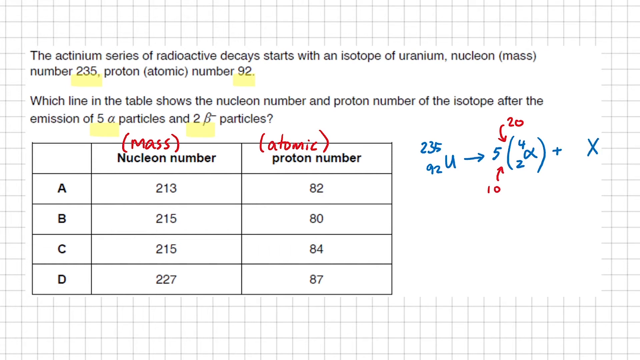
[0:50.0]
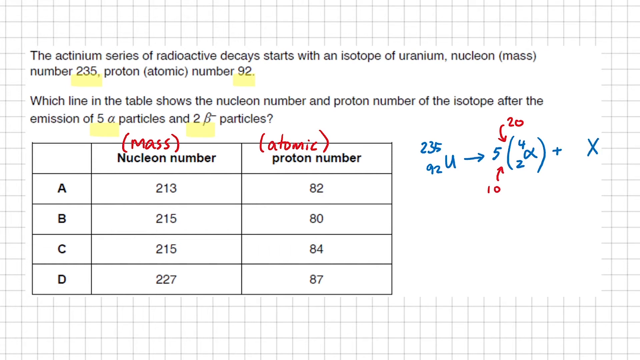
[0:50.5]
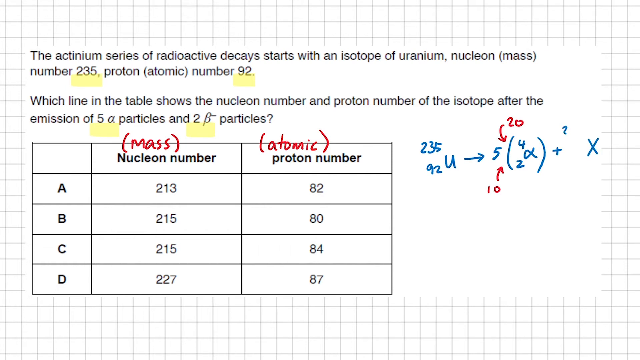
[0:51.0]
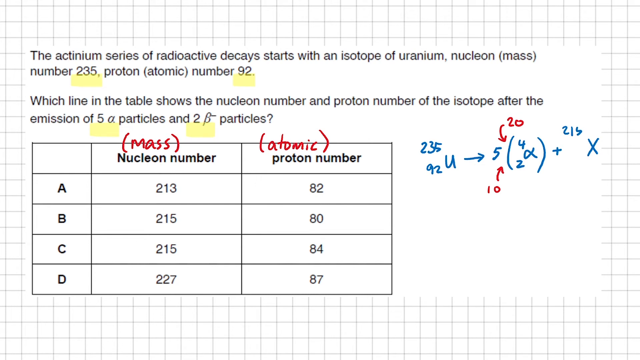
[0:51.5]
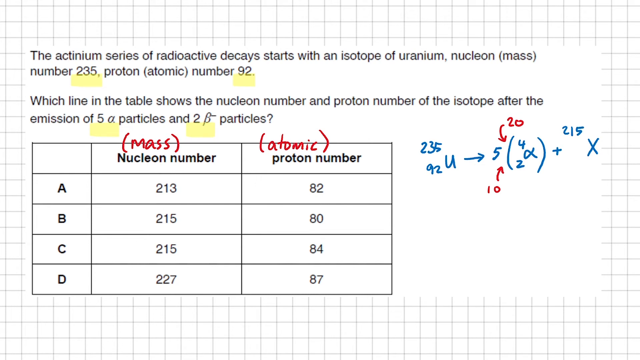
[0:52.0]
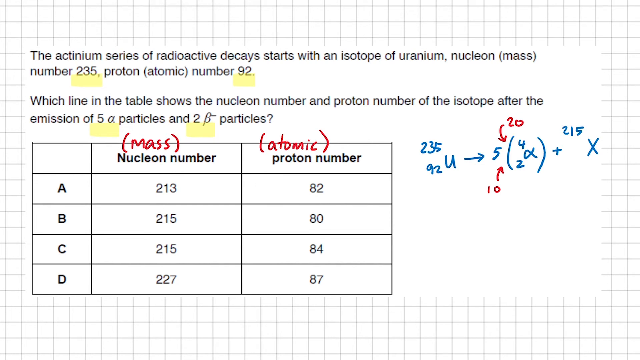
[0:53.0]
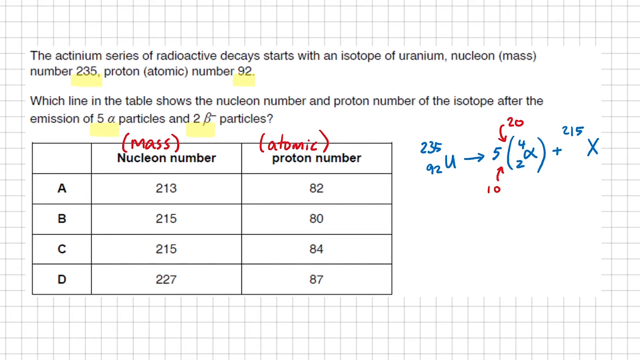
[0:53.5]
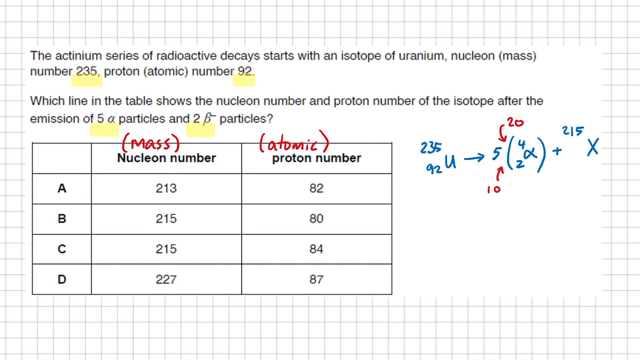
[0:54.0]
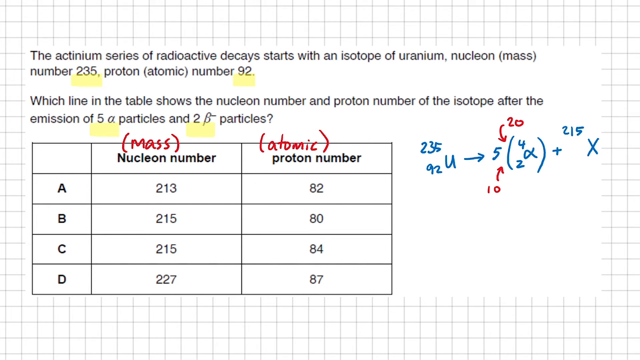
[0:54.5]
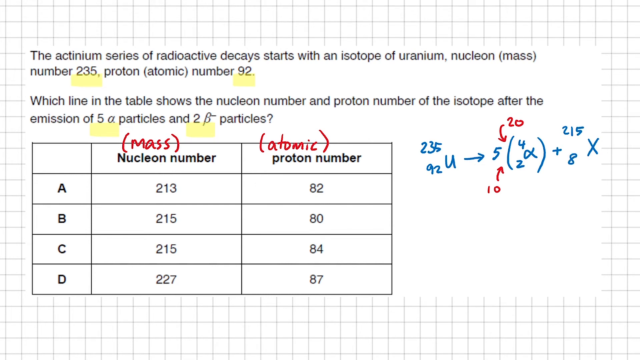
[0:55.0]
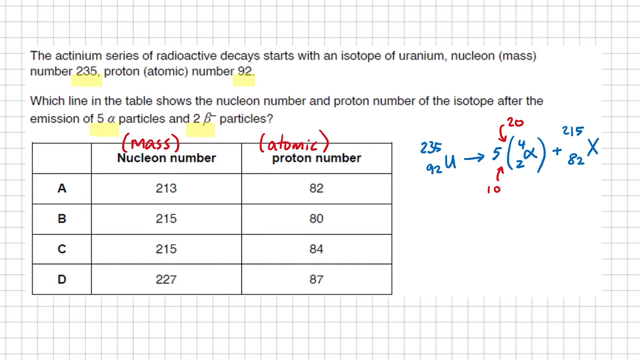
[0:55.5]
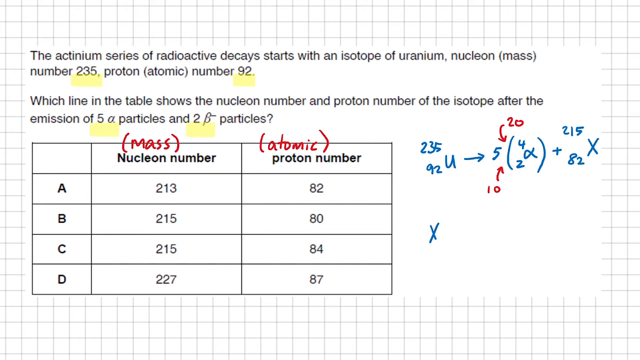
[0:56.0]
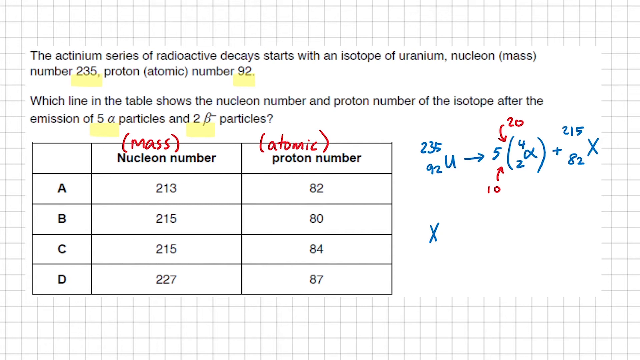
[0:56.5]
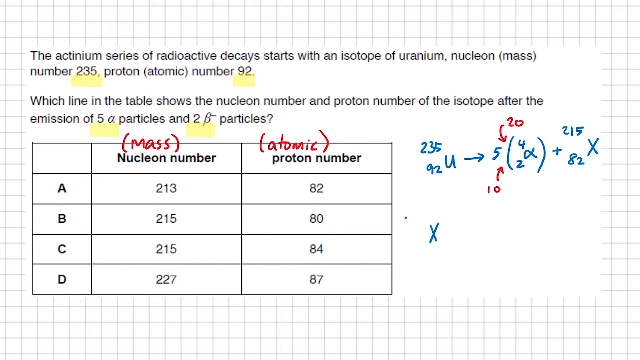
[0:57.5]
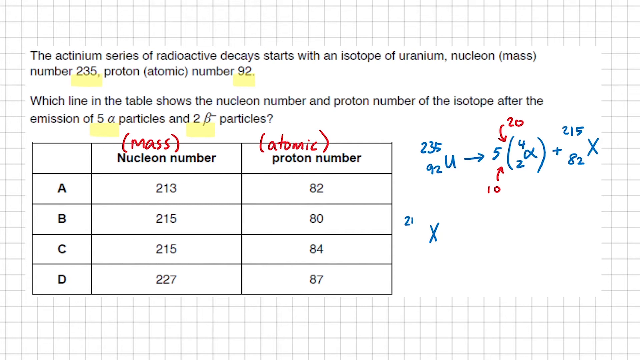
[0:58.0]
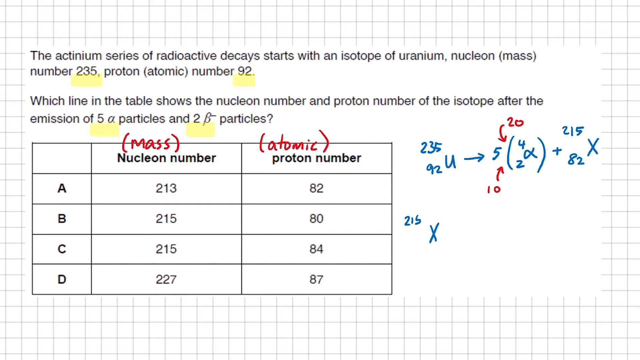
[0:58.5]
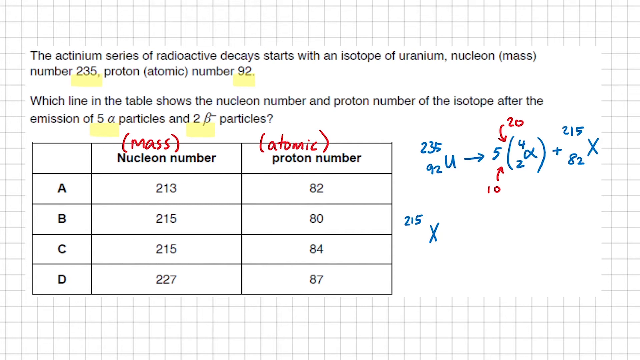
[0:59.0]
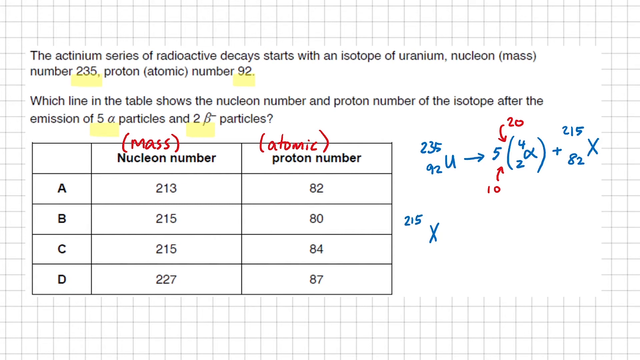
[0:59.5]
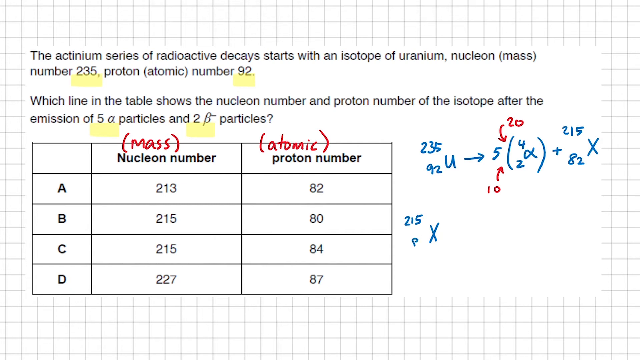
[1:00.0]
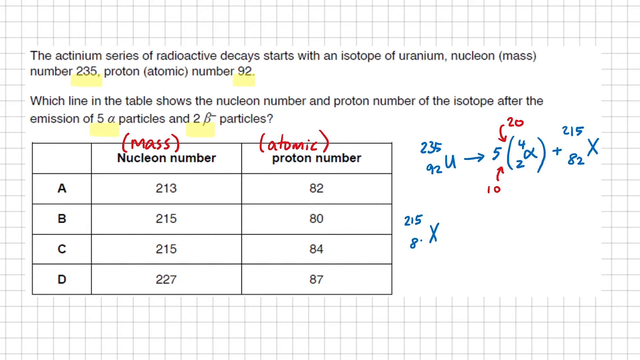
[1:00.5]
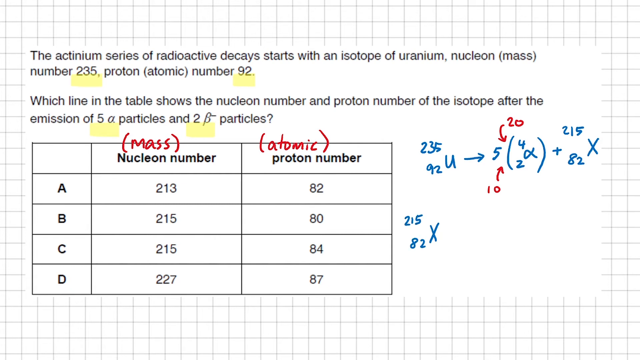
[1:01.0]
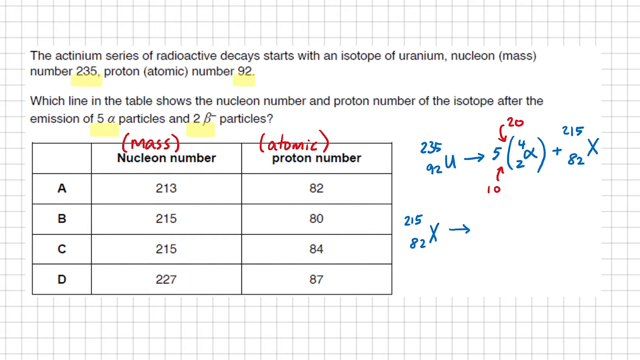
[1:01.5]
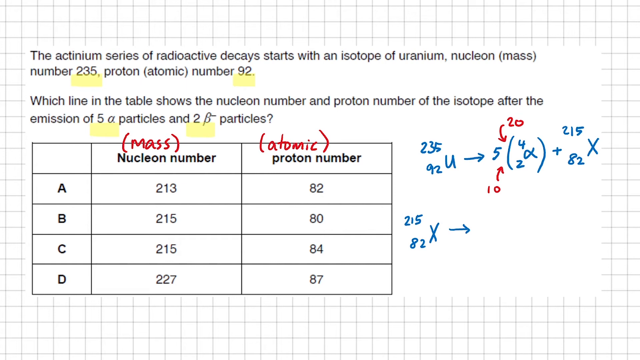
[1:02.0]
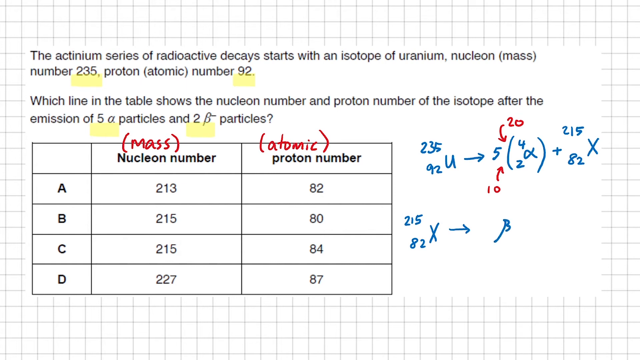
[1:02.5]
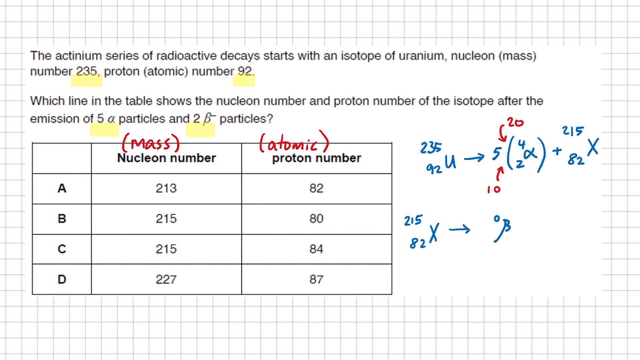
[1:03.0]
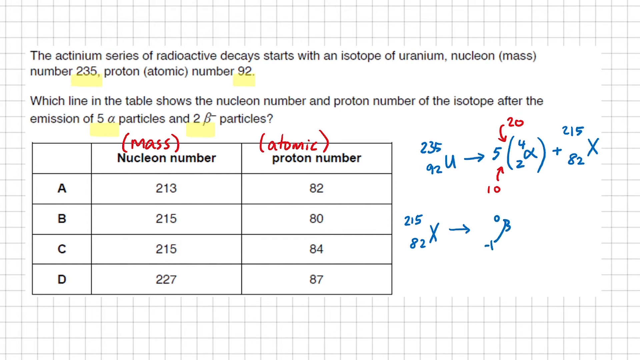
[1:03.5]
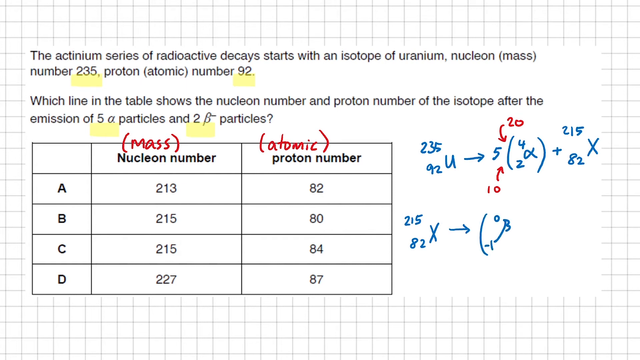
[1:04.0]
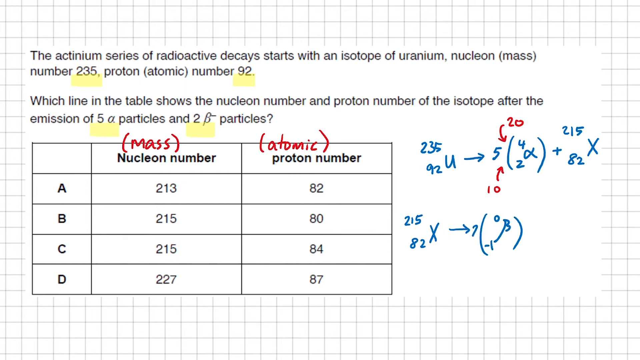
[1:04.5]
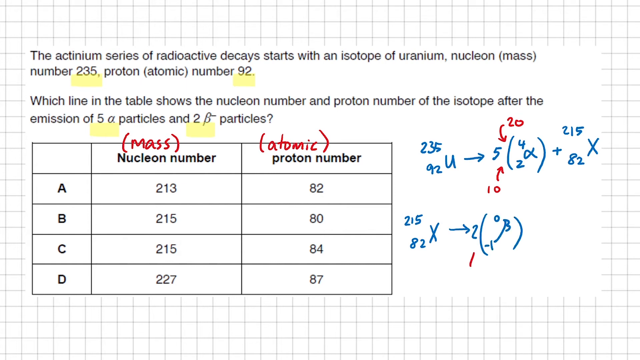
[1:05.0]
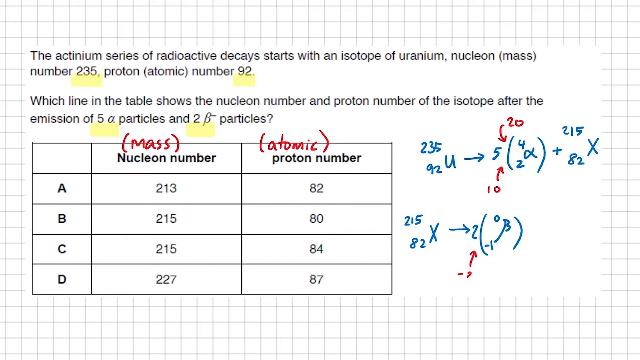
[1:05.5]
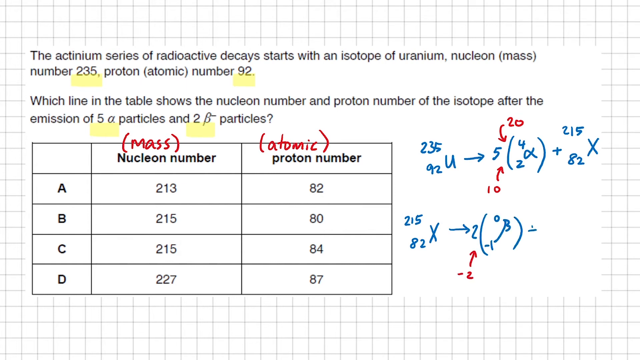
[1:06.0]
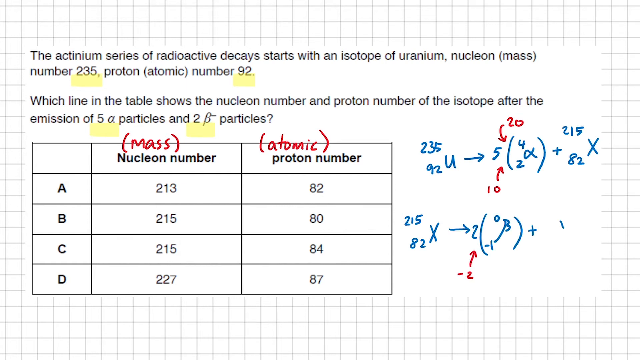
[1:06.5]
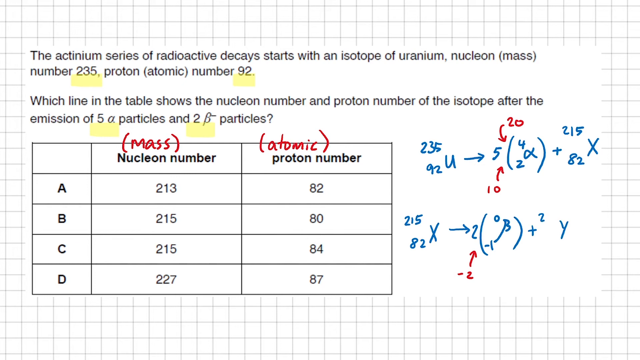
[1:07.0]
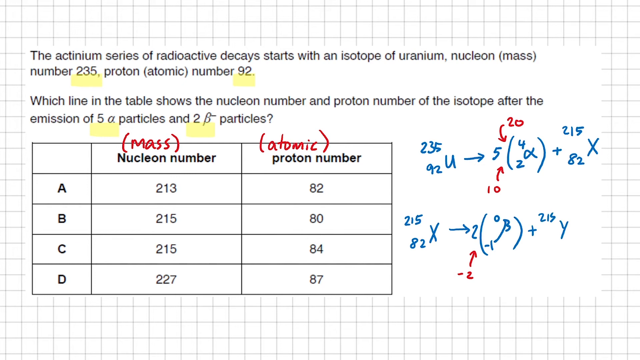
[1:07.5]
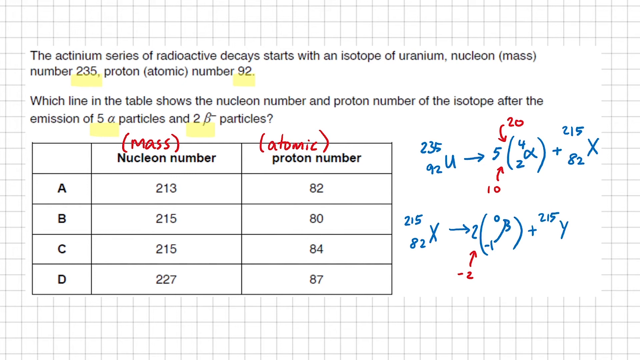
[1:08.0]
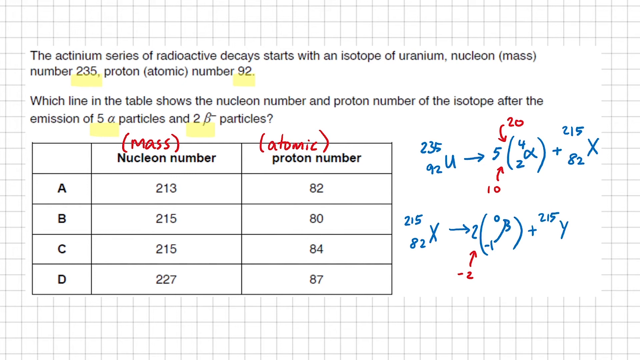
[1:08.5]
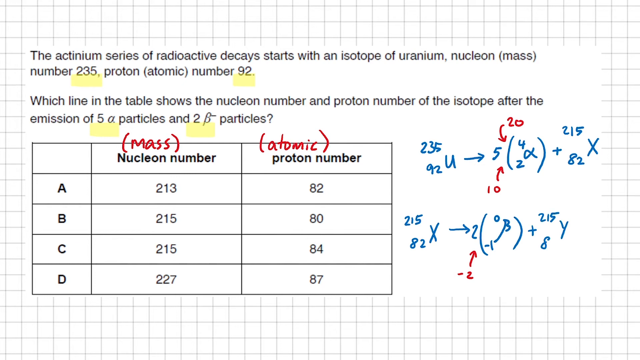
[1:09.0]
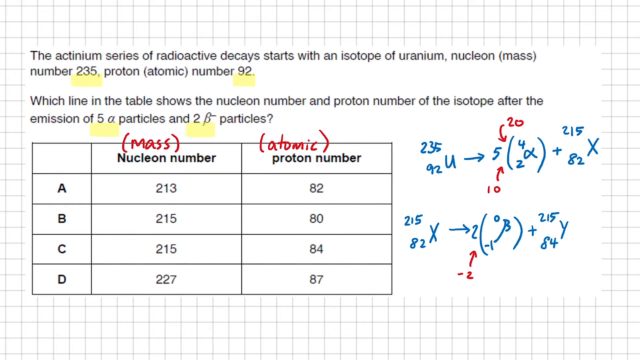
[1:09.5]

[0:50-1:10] A black and white grid pattern is on a computer screen, with a science question in front of it giving context about a nucleon number and a proton number. Those numbers are highlighted underneath in yellow. A table is provided, along with a question asking which line on the table is the correct answer, with four possible answers. Two columns of the table have been labeled, and an equation has been started in the blank space to the side. The equation continues to be written out, mainly in blue marker for elements with numbers, while a red marker points to various things as if adding explanatory context. Nothing else in the image moves. No hands or markers are seen; the text simply appears on the page as it is written.